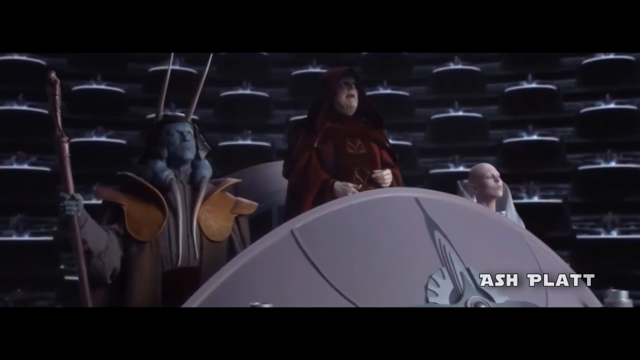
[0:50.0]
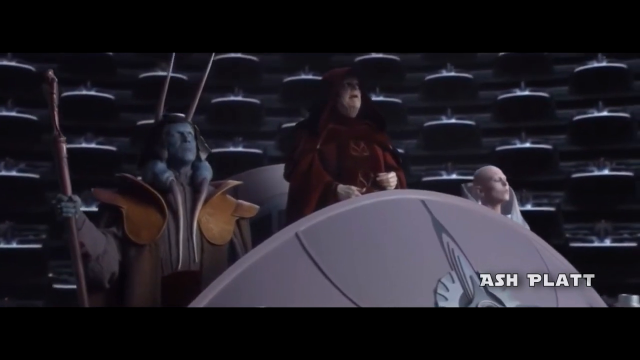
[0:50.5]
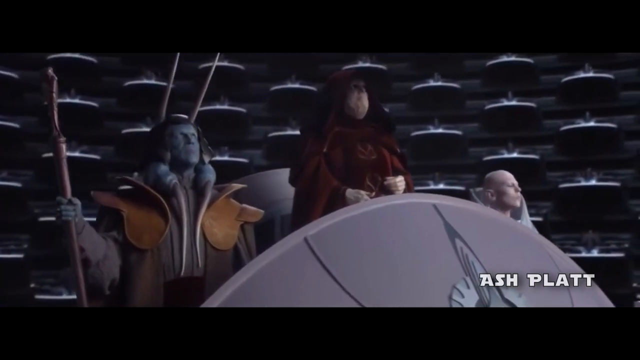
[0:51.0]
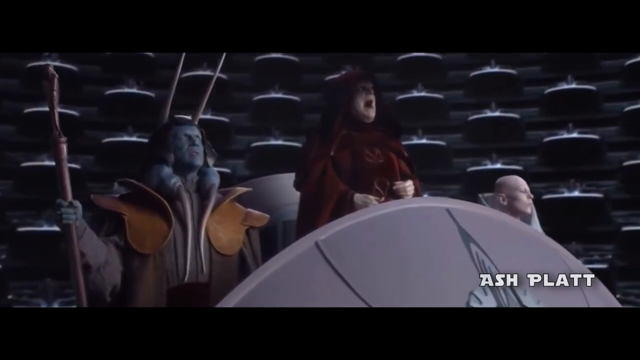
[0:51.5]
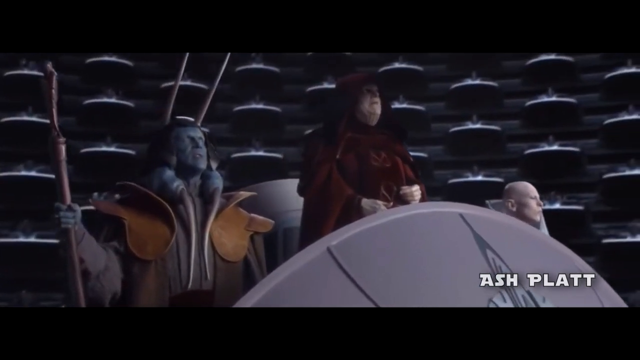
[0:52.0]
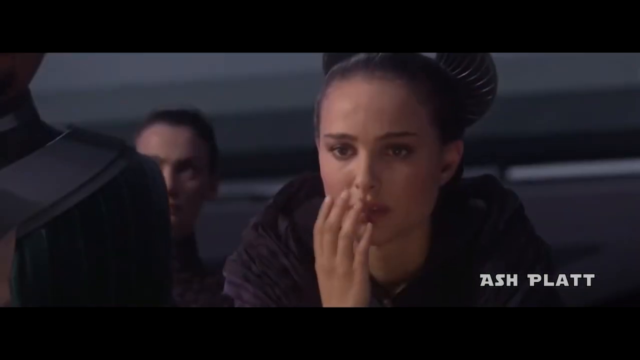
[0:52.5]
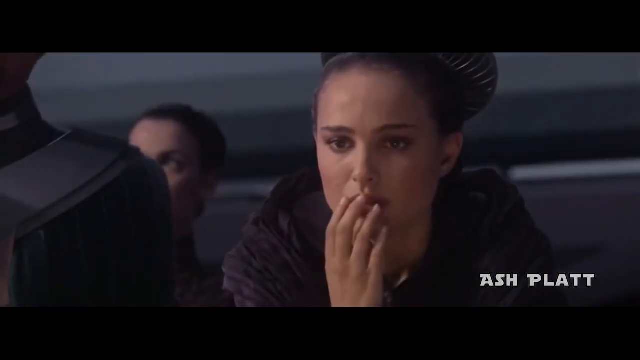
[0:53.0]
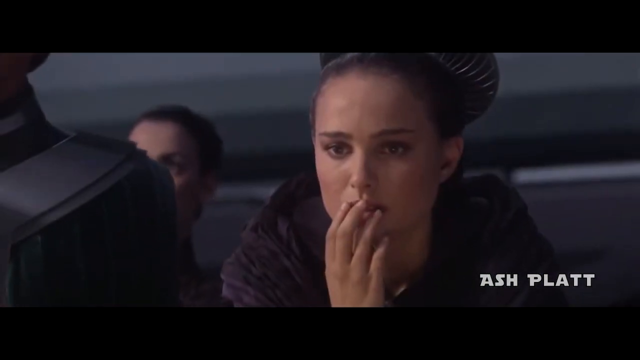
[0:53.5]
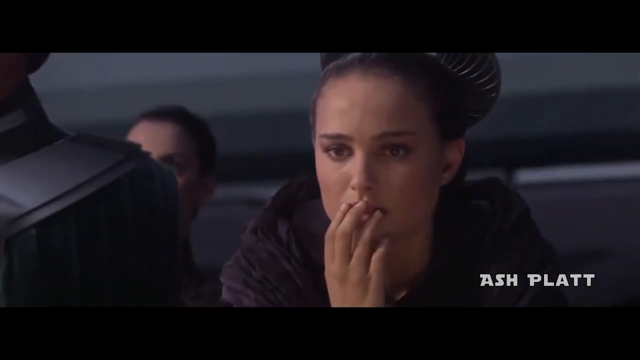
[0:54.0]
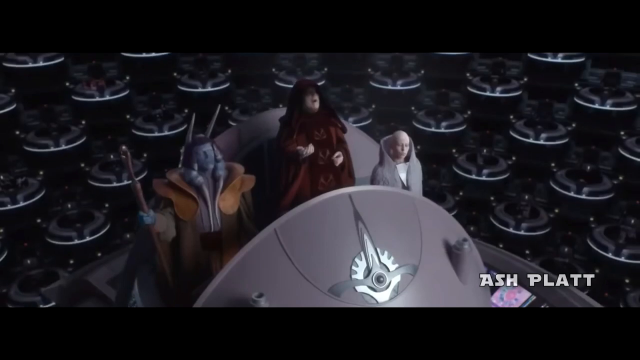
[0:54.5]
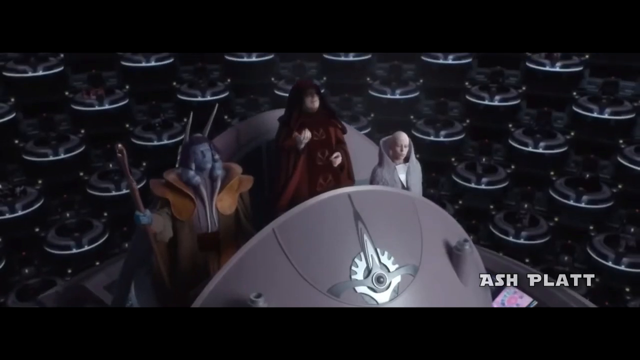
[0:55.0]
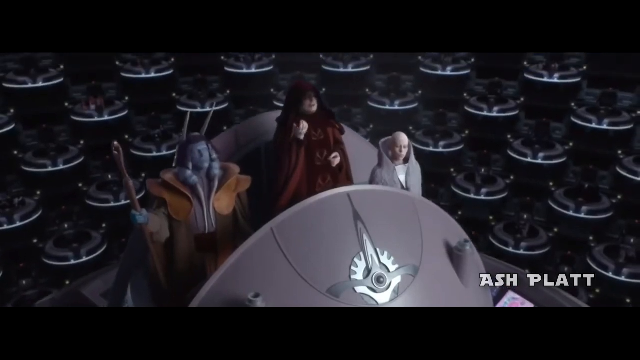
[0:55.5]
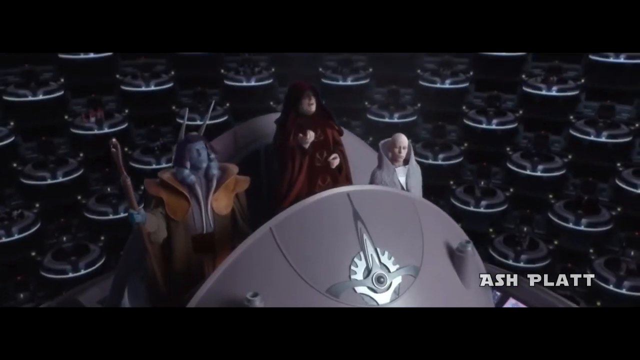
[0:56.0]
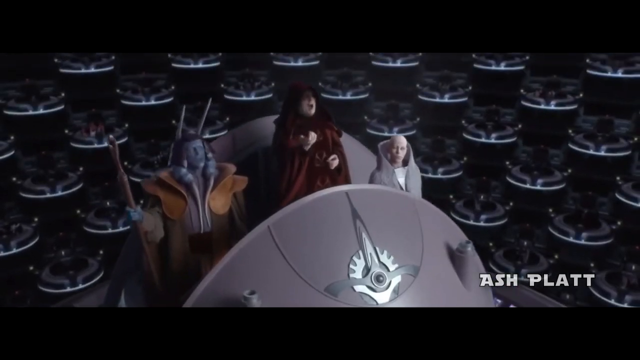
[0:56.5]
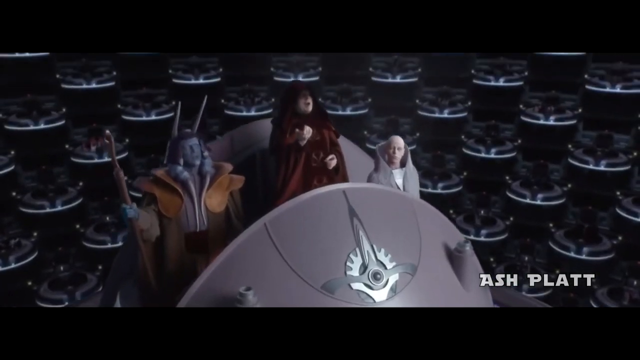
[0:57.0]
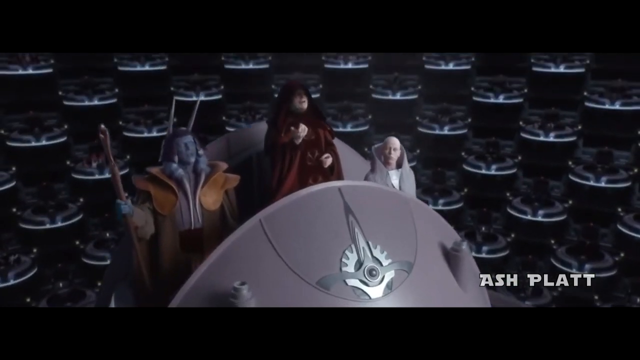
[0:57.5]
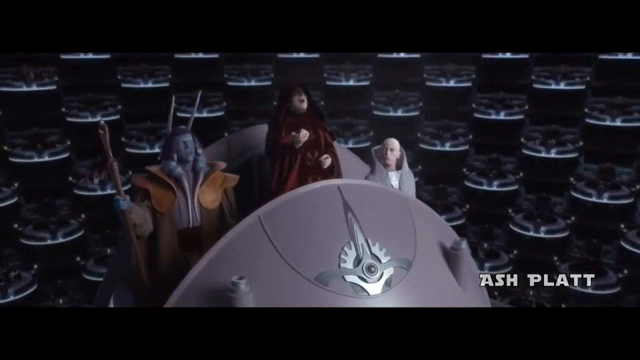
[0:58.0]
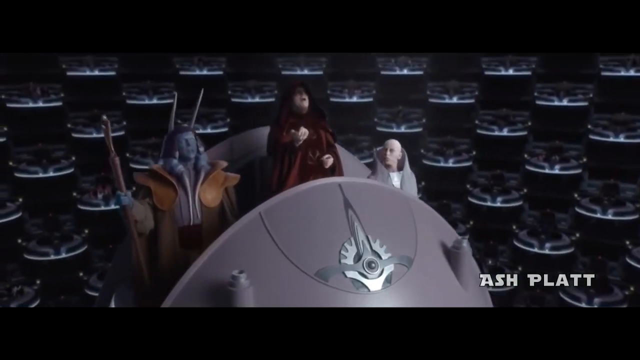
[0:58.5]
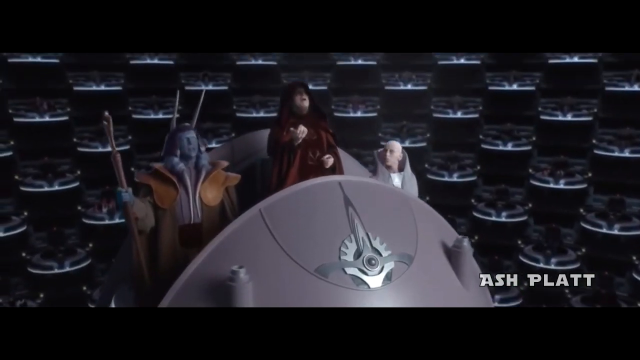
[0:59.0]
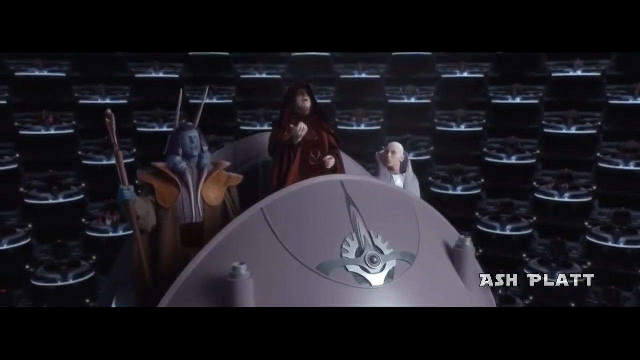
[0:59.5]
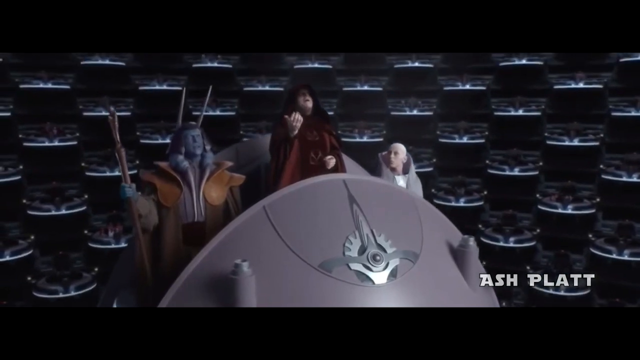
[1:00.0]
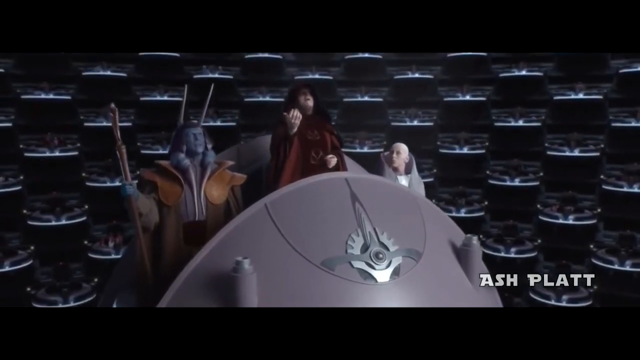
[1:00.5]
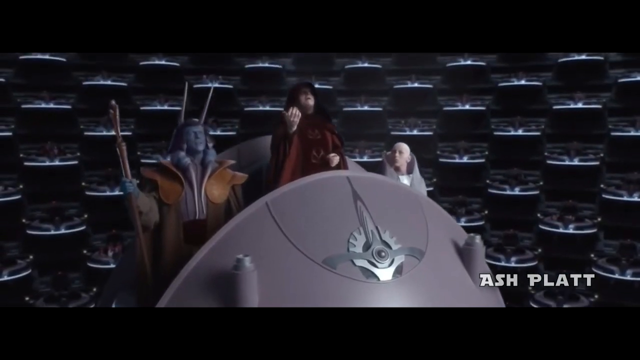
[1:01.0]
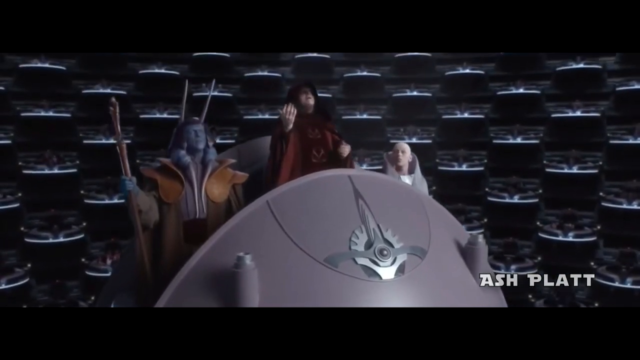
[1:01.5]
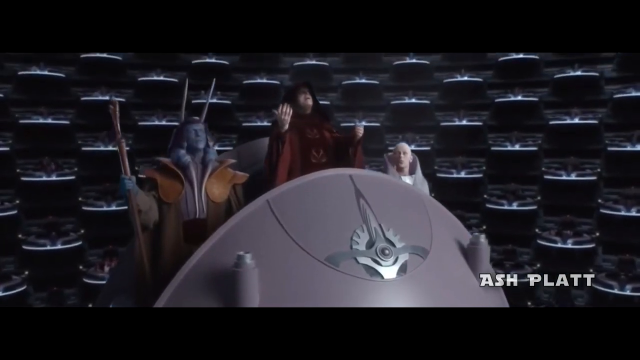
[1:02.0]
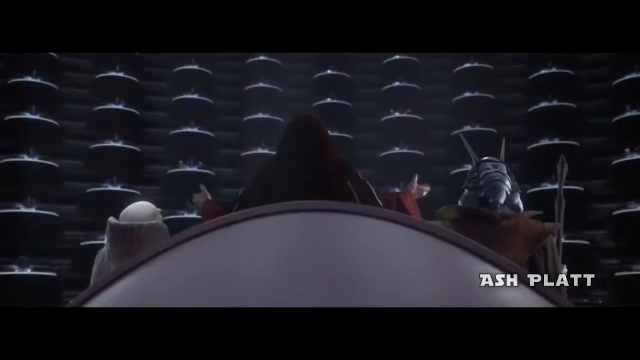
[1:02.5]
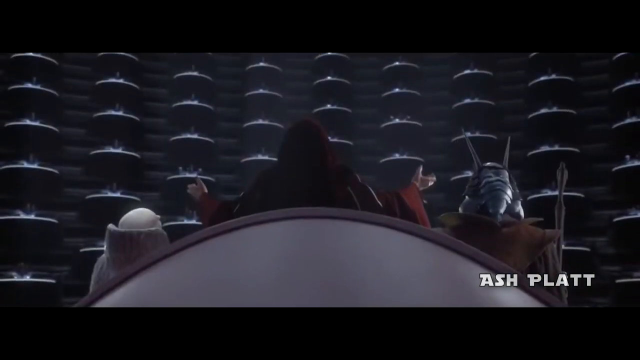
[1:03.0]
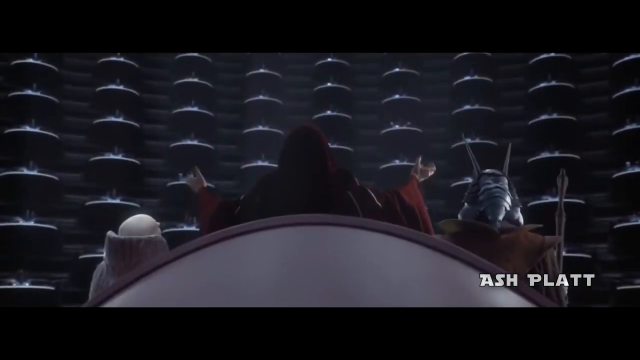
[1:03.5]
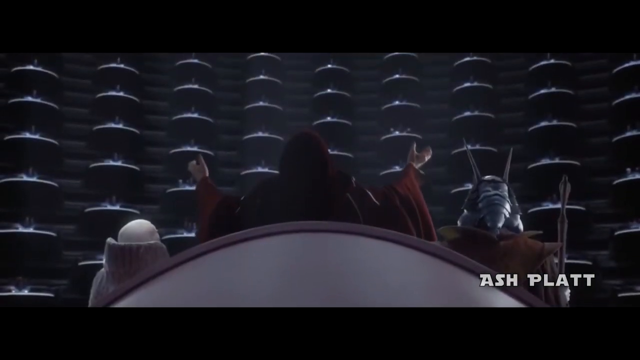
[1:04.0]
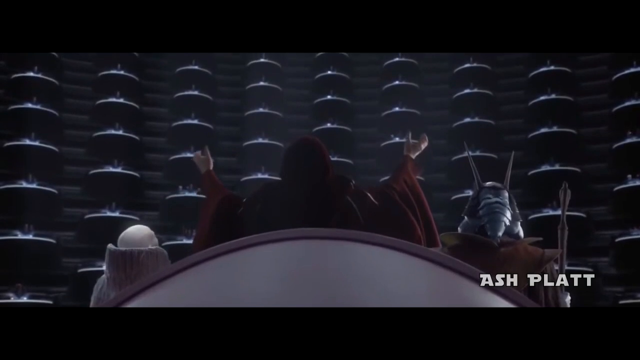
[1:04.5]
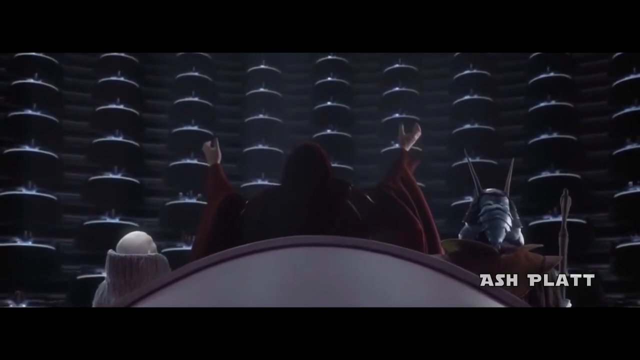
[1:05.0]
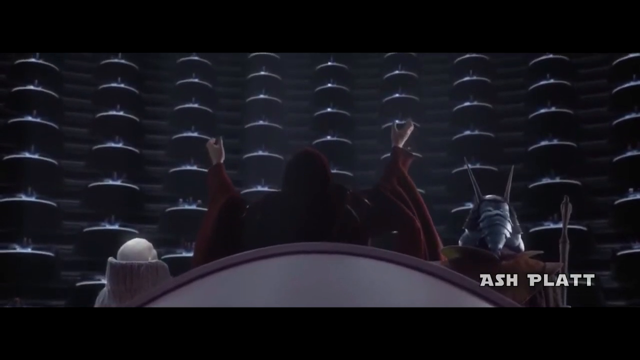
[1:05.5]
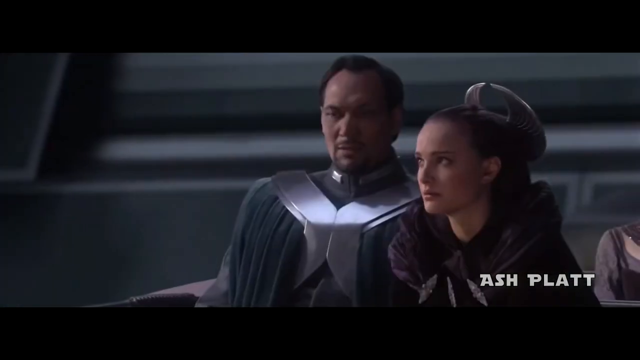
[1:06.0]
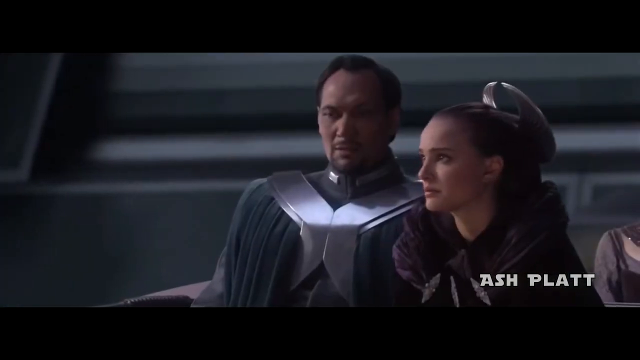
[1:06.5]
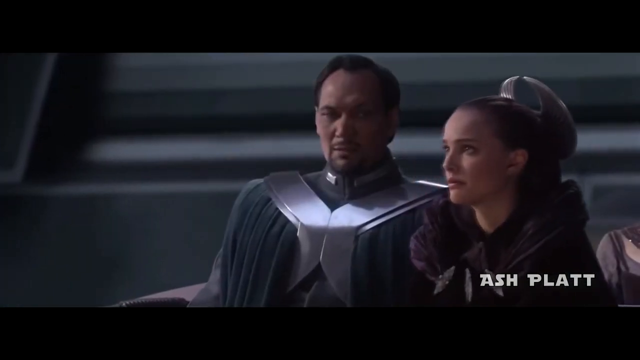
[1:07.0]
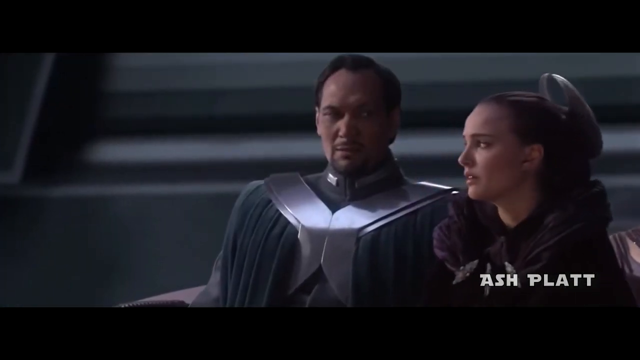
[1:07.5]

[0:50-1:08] Three individuals stand atop a structure. On the left is a blue man wearing a brown robe and holding a staff; on the right is a female character who is pink and bald; in the center is a pale man in a red robe. Surrounding them are spectators in oval pods, lit at the front with streaks of light. The video transitions to a Caucasian woman who appears in shock, her right hand open across her mouth. It cuts back to the three individuals in the structure as the pale man in red continues to speak, and the camera pans down, revealing more spectators in their pods. As he speaks, the man gestures first with his right hand, then lifts both hands in a Y-like shape. A beam of light shines down upon him. The video transitions to a Caucasian woman moving her head backwards in disapproval. Next to her is a Caucasian man with black hair, wearing a grey robe with a metallic object dripping from both shoulders and connecting in front of his chest.